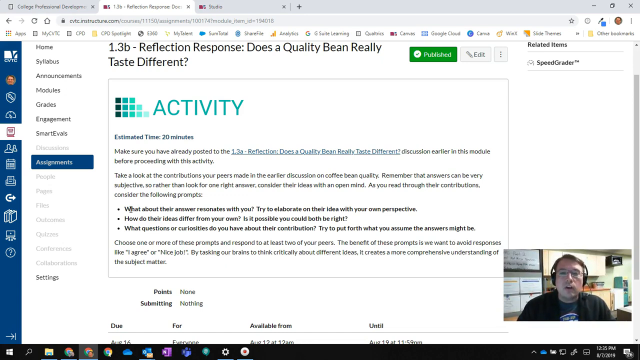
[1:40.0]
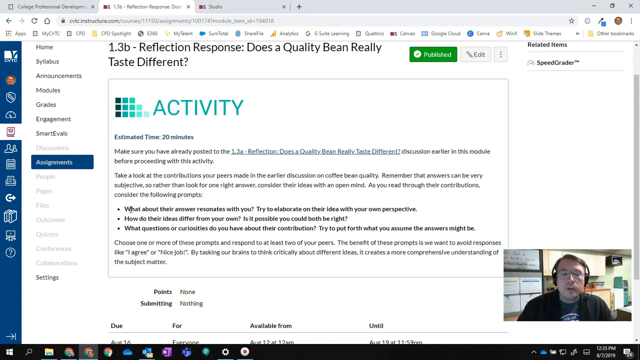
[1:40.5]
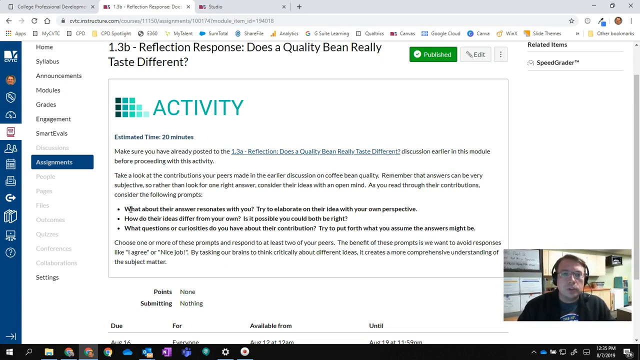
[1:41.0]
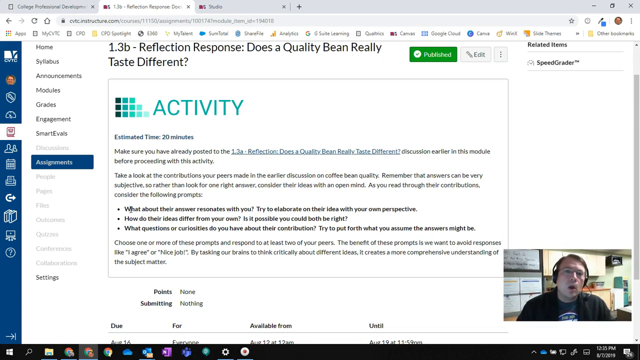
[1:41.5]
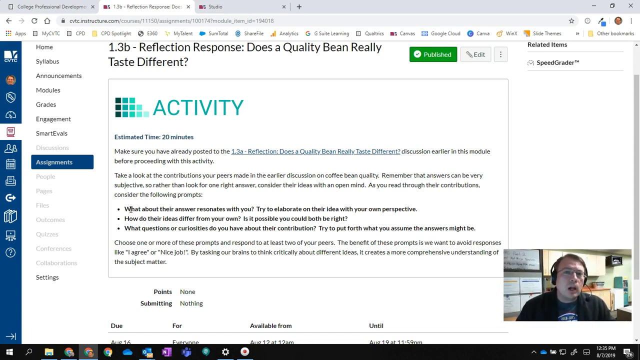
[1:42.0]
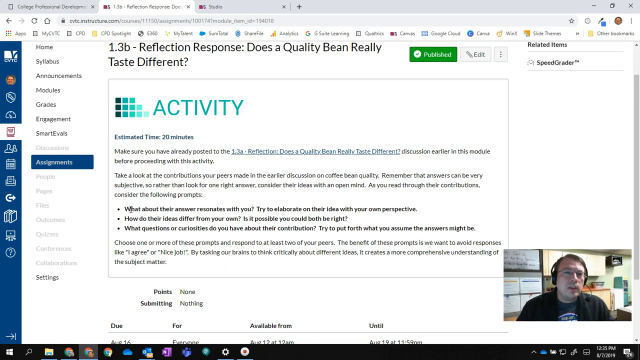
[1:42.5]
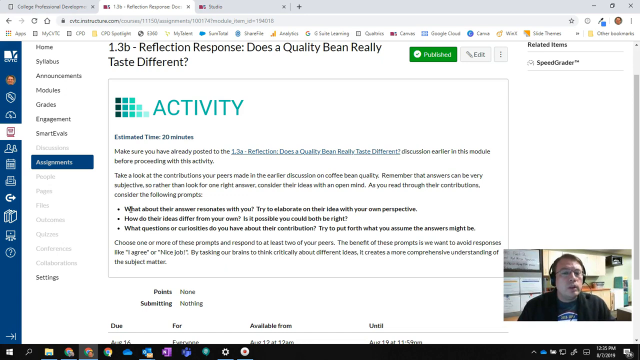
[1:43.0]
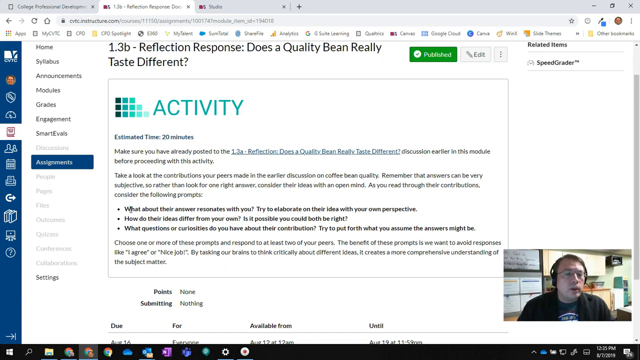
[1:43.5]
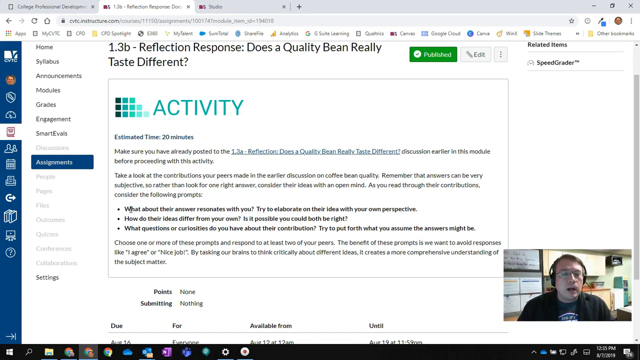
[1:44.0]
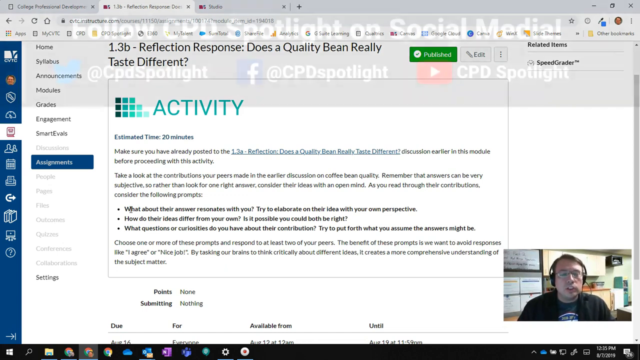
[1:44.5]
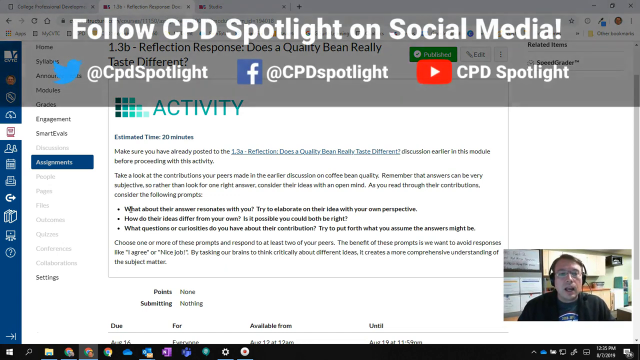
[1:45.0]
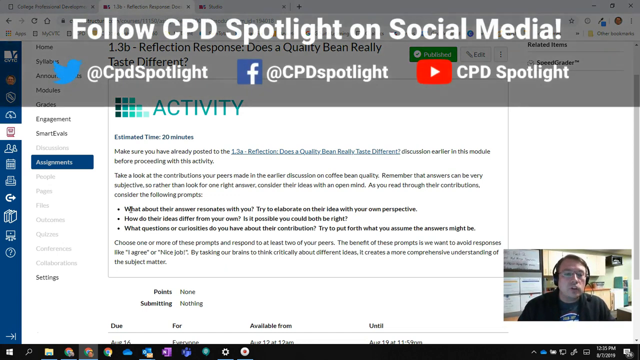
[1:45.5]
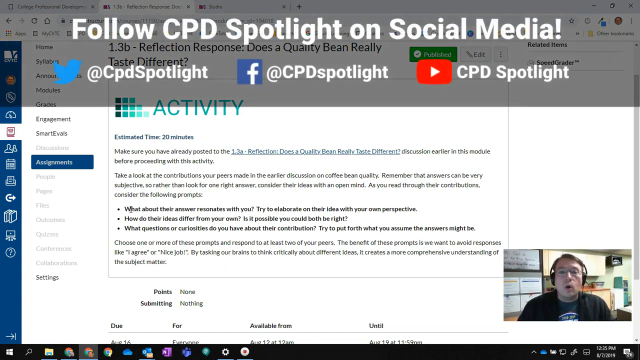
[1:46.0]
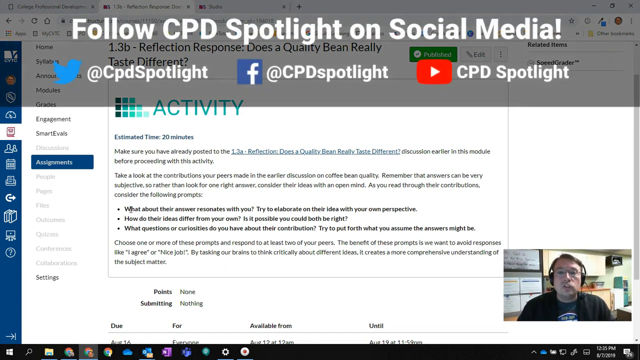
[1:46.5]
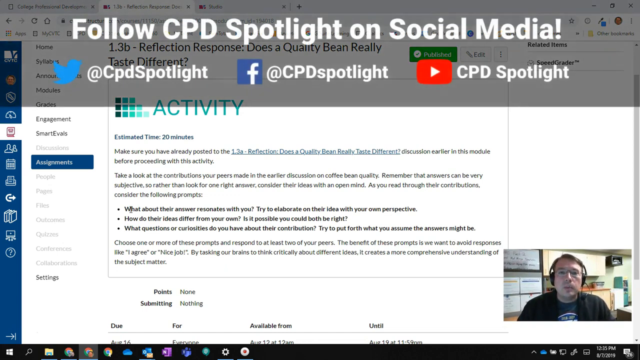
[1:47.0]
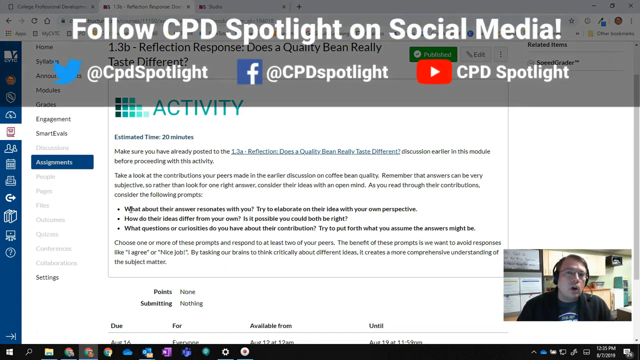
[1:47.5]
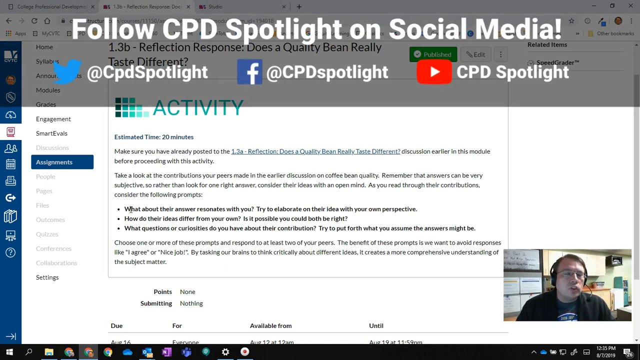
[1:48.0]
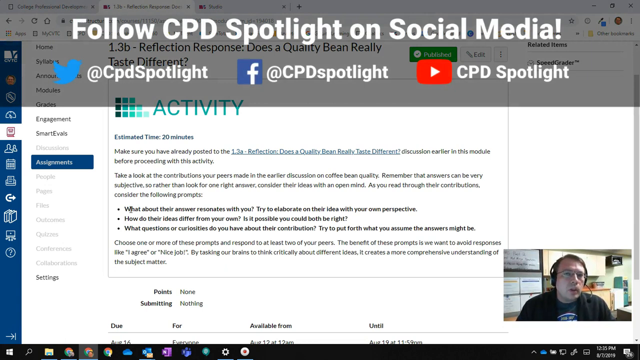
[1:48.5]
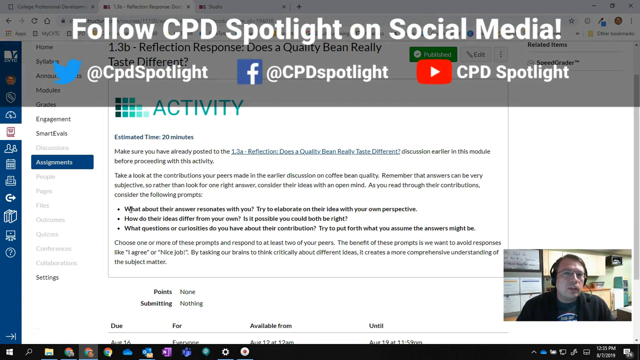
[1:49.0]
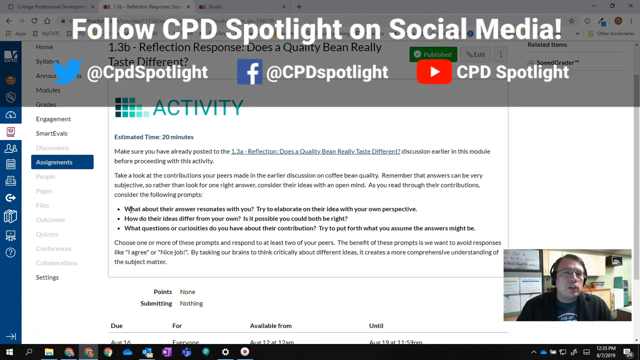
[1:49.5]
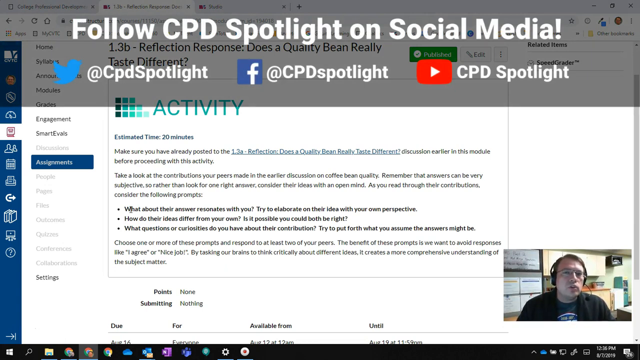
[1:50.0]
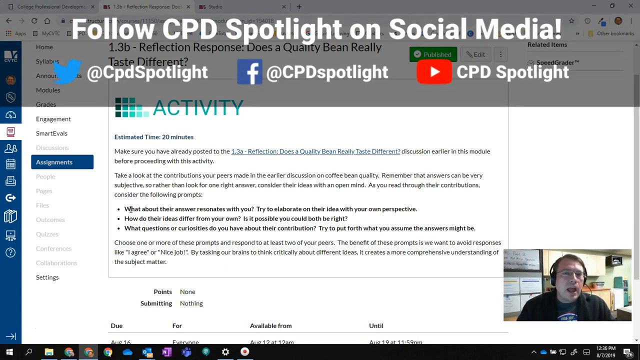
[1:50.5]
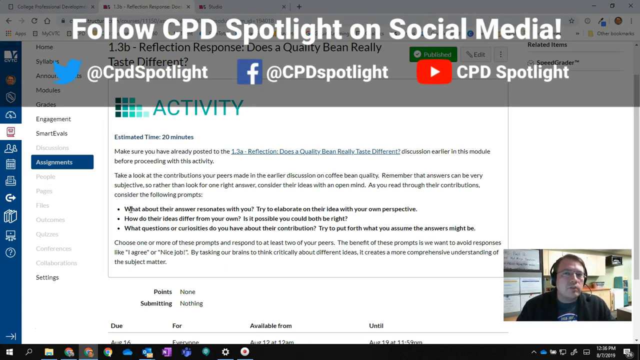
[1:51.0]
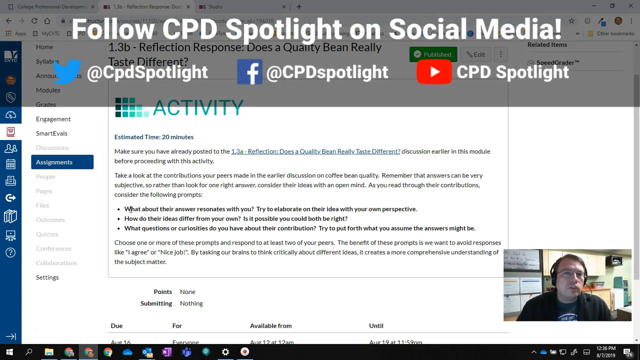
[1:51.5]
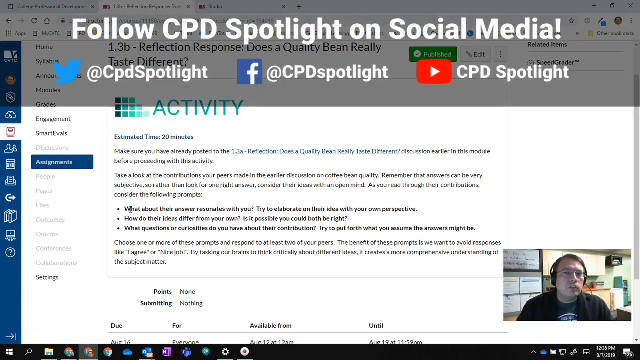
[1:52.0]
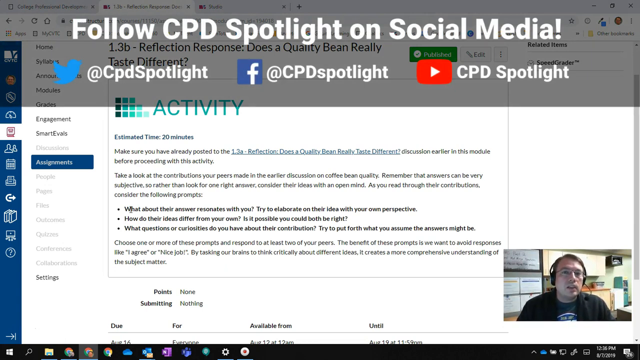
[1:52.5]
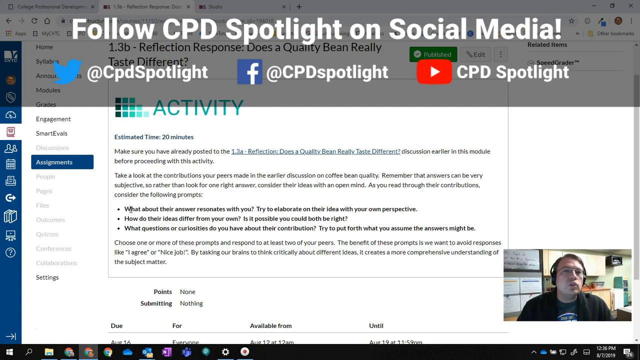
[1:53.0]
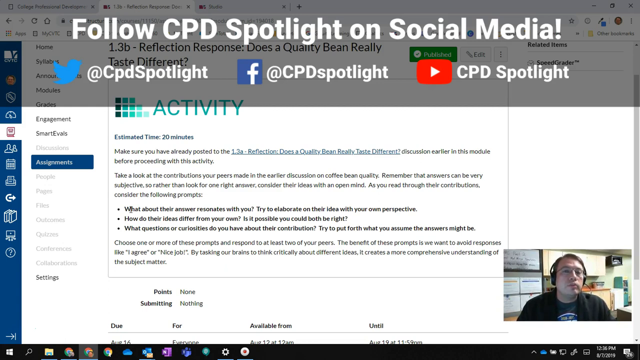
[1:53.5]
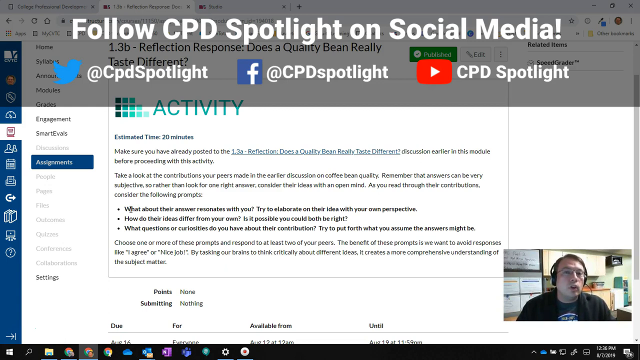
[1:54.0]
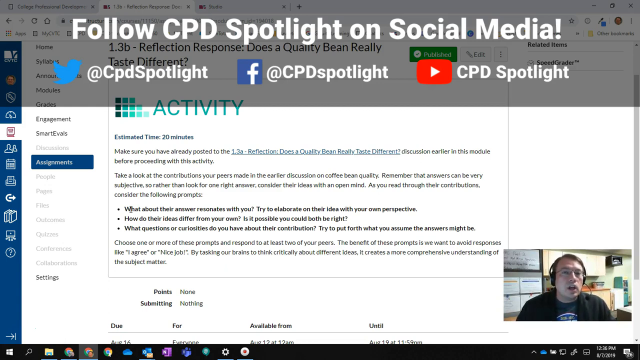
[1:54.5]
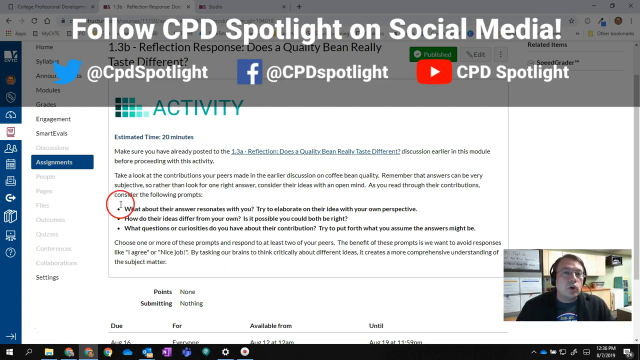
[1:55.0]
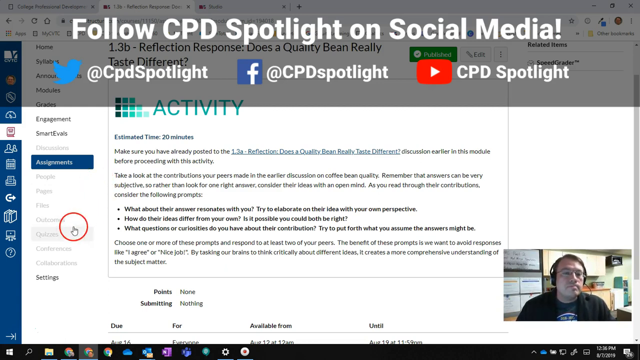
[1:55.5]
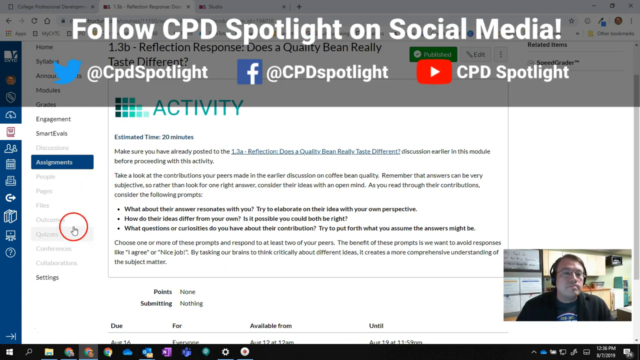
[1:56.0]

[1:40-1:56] A man sits in the office talking and raising his hands as he gestures. He seems to be an online tutor. He shares his screen, which shows a menu listing modules, and goes through the module point by point, highlighting the areas on the PC he is talking about. He keeps scrolling to show the next page.